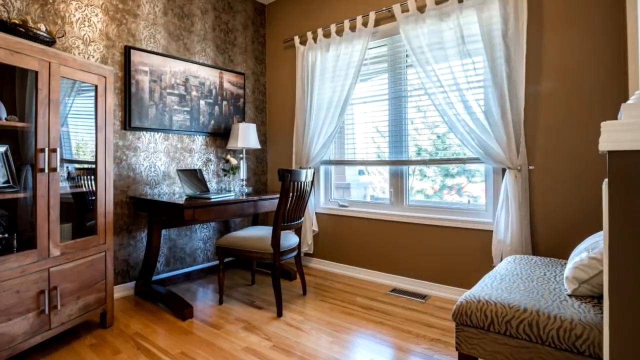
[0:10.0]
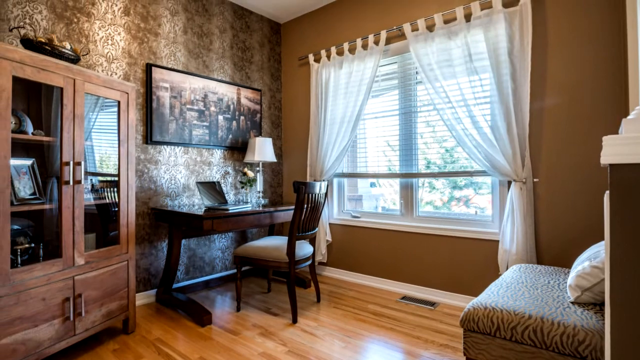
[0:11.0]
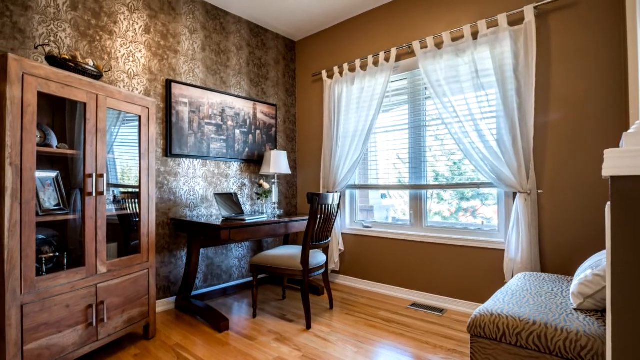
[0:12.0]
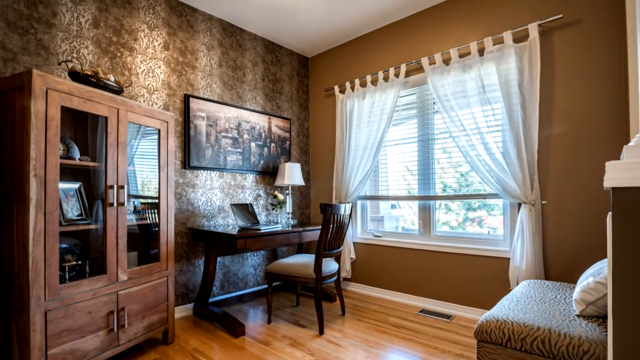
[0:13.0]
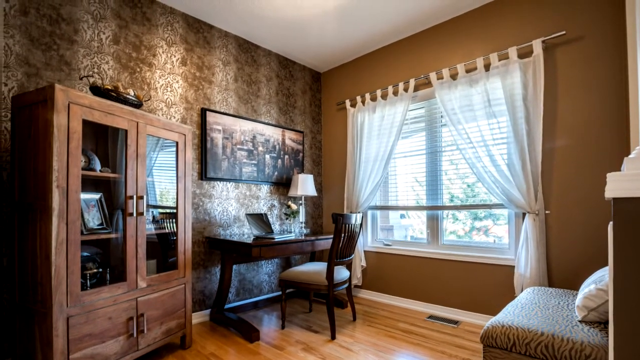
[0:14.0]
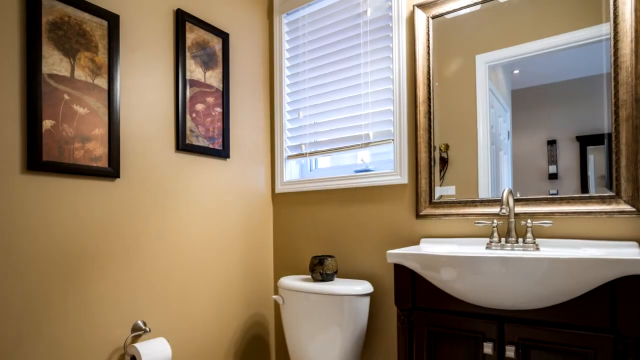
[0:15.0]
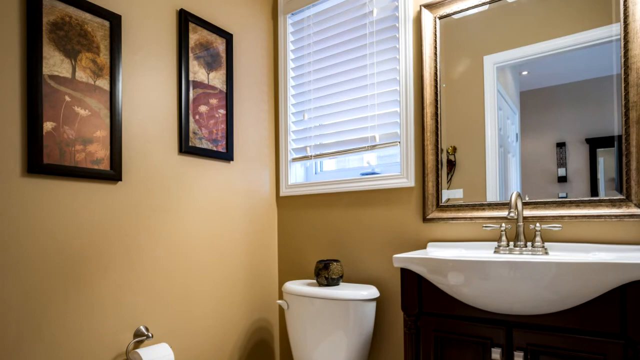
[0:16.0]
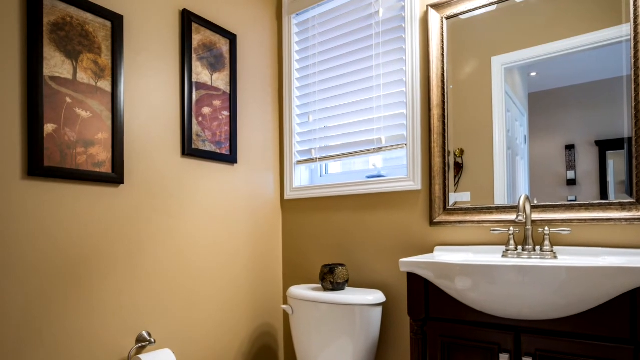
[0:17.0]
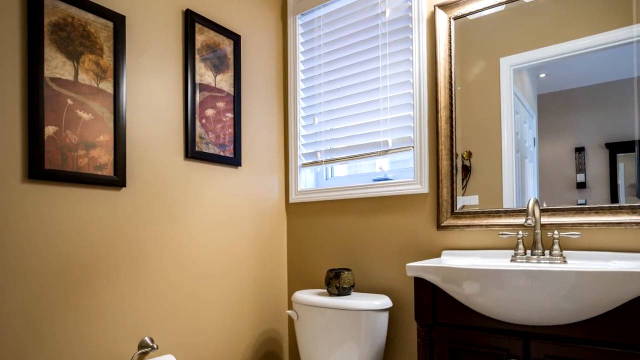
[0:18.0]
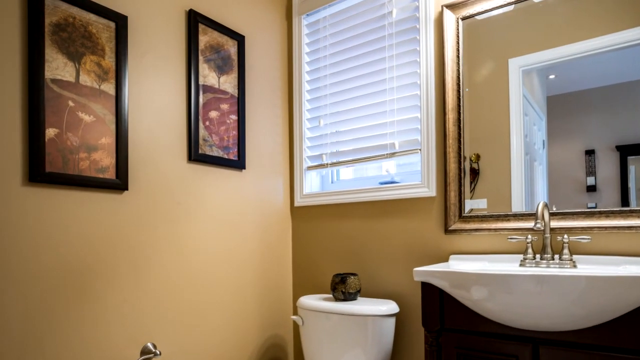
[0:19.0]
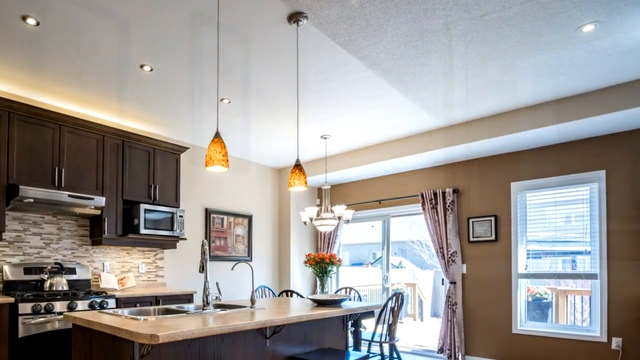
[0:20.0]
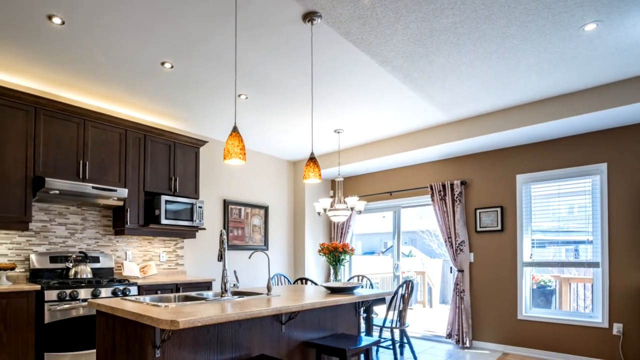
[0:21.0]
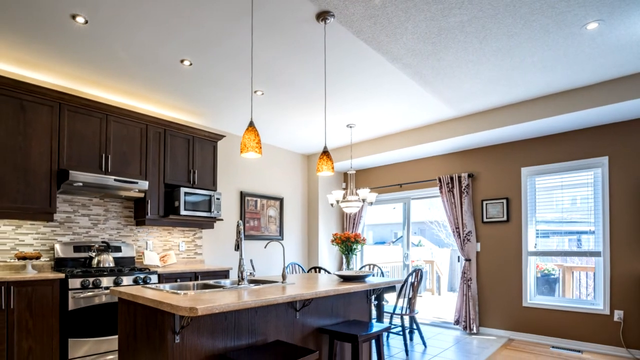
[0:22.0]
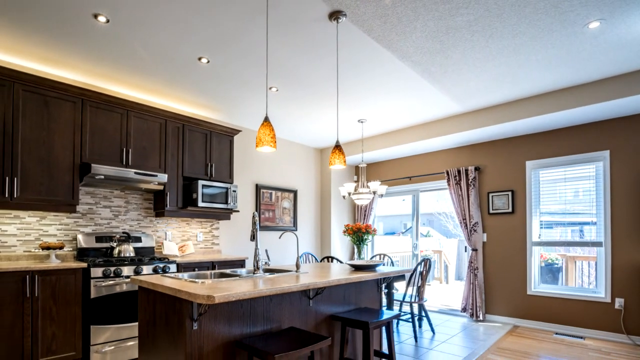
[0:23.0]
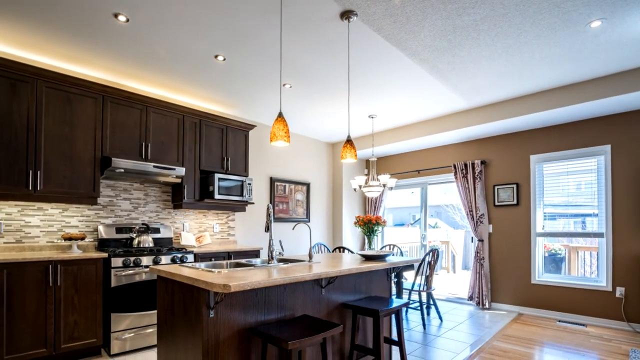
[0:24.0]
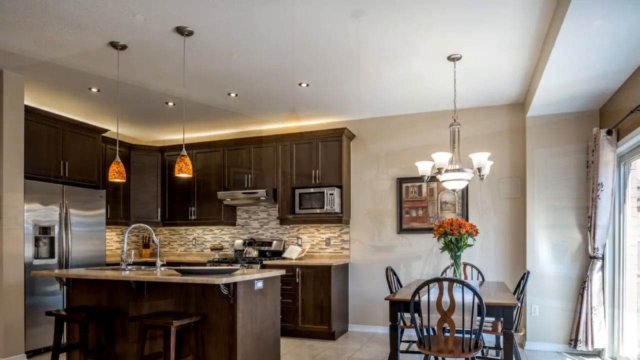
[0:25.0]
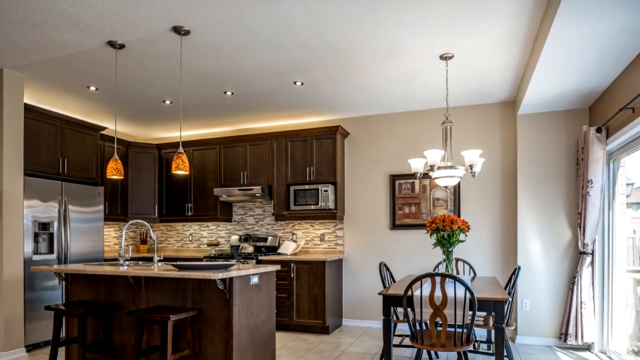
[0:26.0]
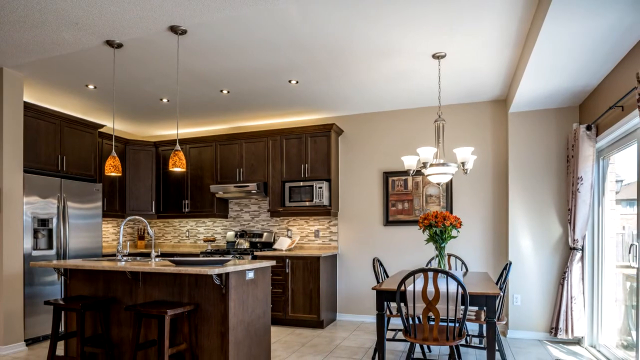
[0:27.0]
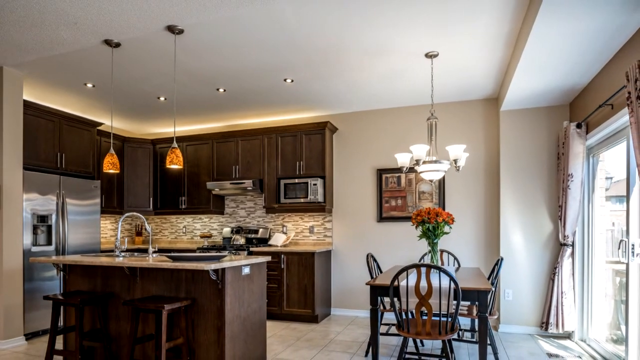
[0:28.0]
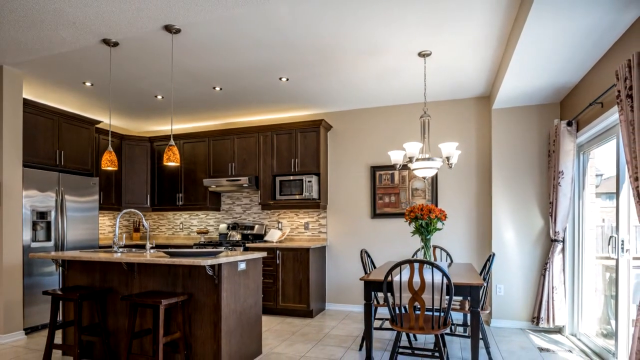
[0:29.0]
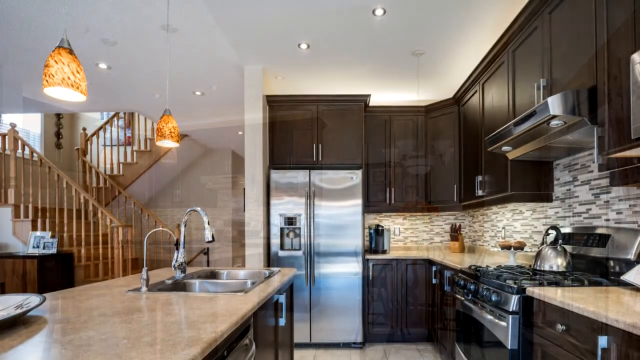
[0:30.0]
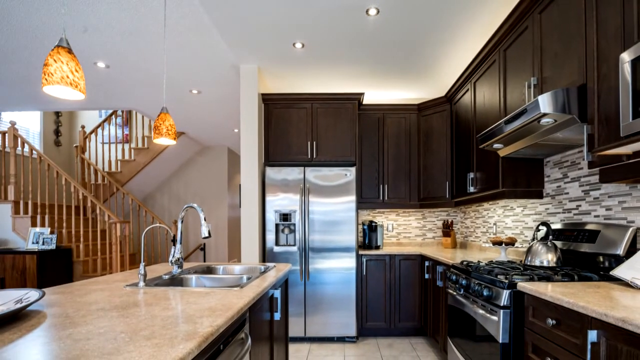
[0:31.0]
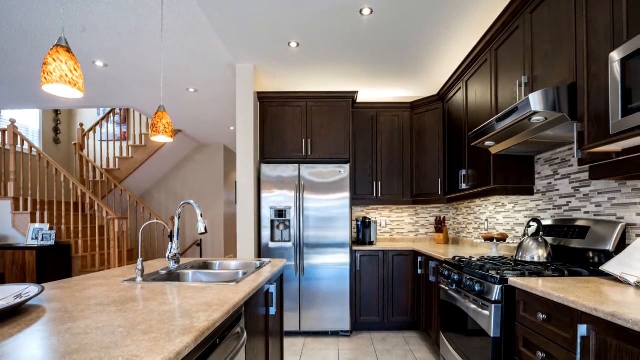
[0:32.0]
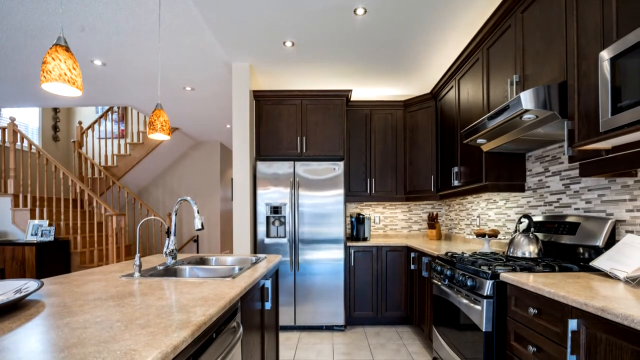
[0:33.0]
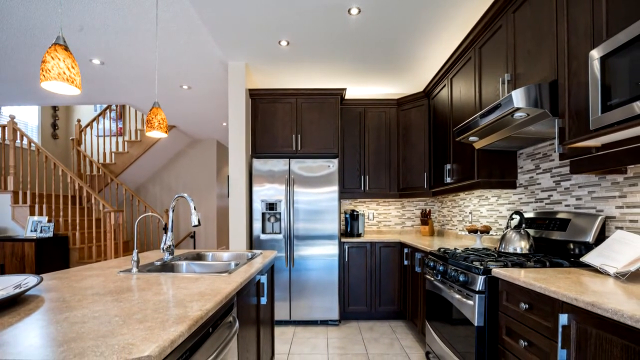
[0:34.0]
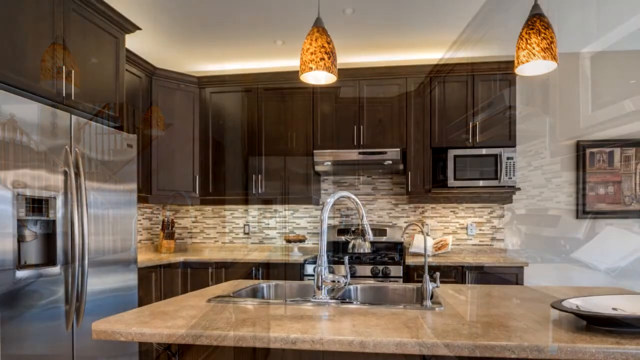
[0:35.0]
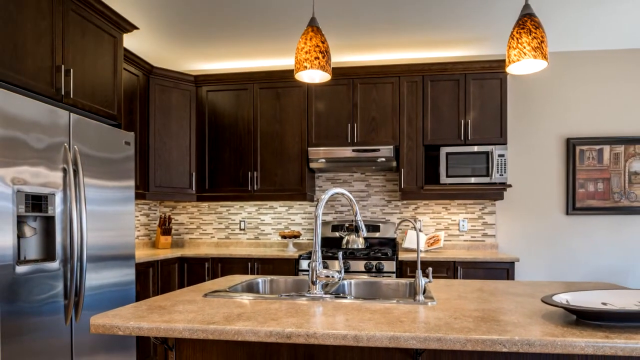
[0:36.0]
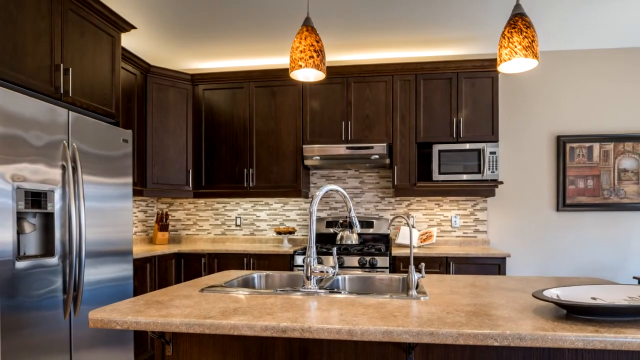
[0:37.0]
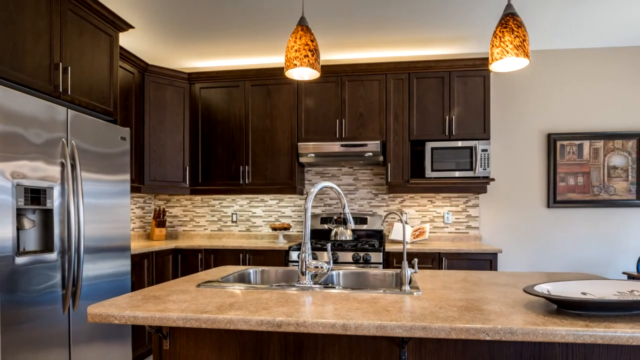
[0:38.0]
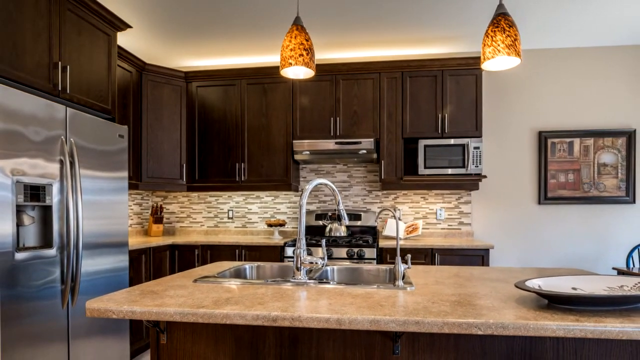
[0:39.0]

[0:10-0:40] Inside a house, a room that looks like a sunroom has a set of two windows side by side with curtains and blinds, and sunlight shining through. The wall on the right is light brown or dark beige, and the left side has a swirling pattern. There is also a case with glass doors holding pictures and other memorabilia on its shelves. A transition shows another room that looks to be a bathroom, with a sink below a mirror, a toilet, and a small window at the top. Another transition shows the dining area and kitchen, where a high-quality stove and a set of cabinets are seen. Natural light shines through the windows, and there is also light from lights hung from the ceiling. The colors all match, with beige, cream, and lighter and darker browns along with stainless steel appliances and accents.